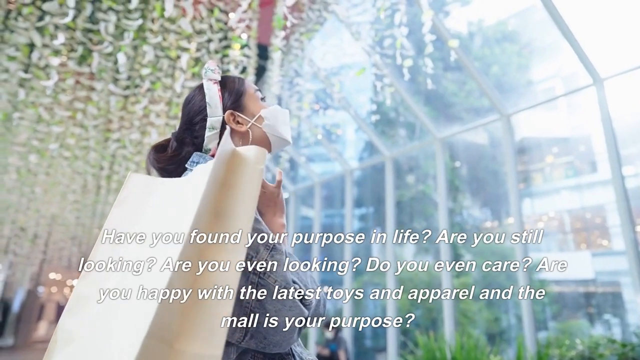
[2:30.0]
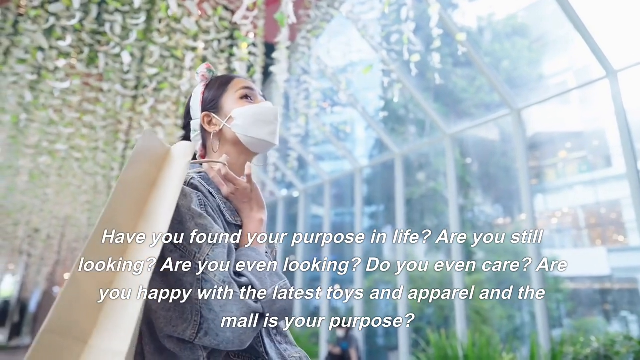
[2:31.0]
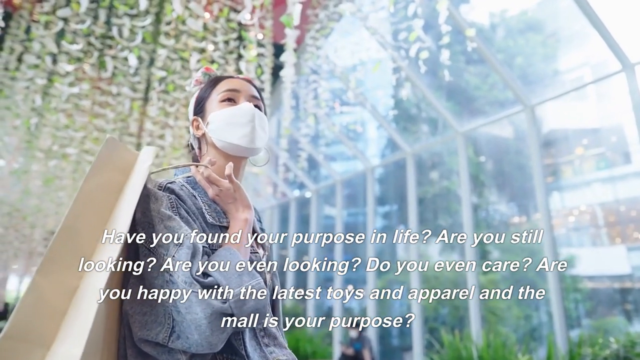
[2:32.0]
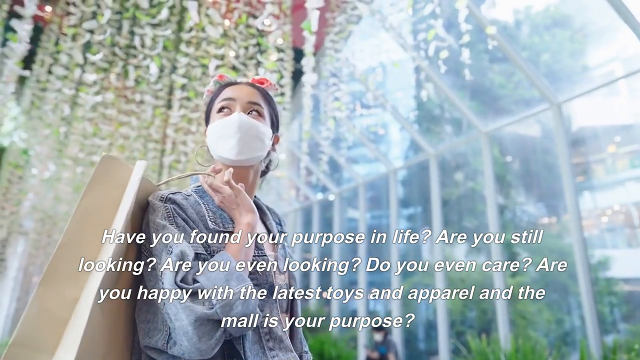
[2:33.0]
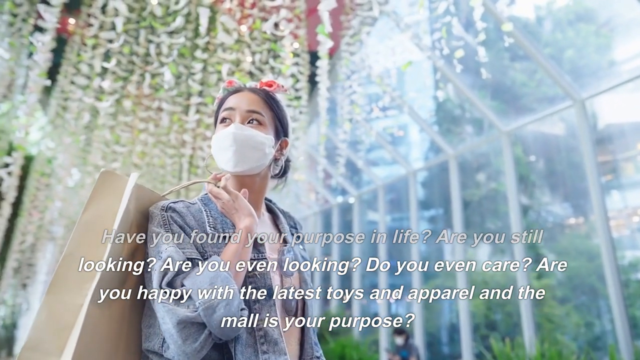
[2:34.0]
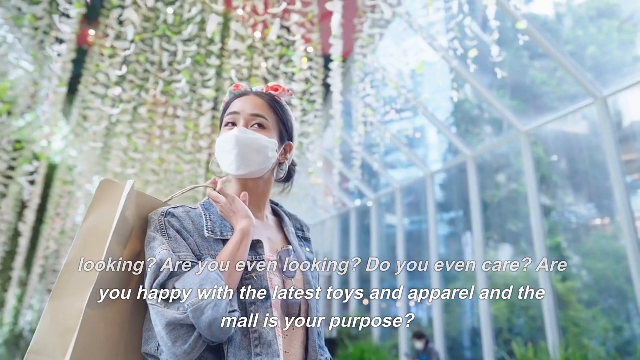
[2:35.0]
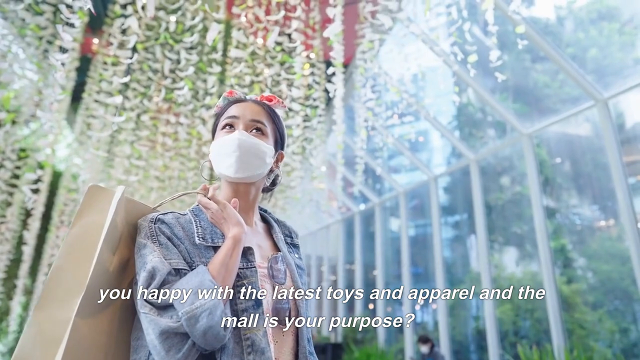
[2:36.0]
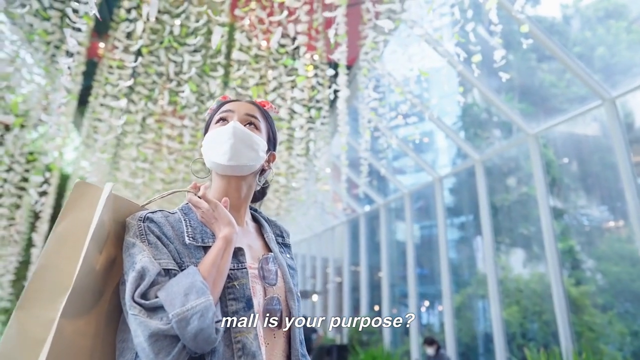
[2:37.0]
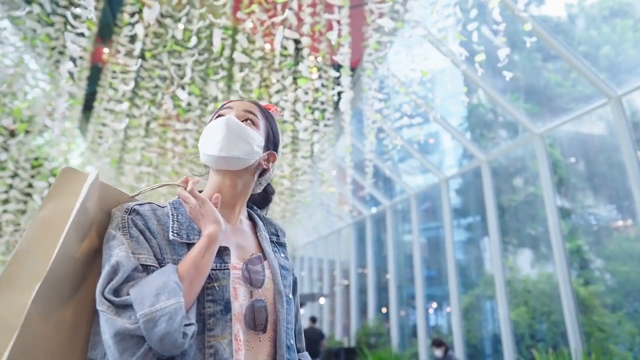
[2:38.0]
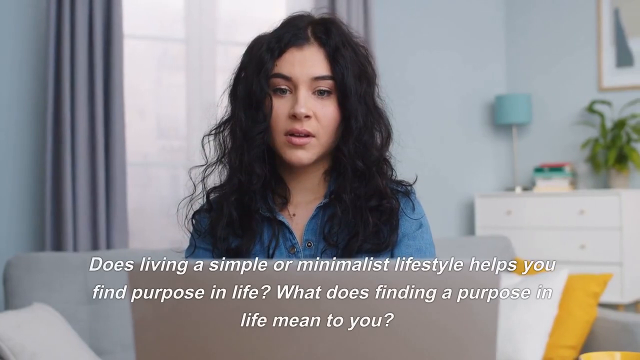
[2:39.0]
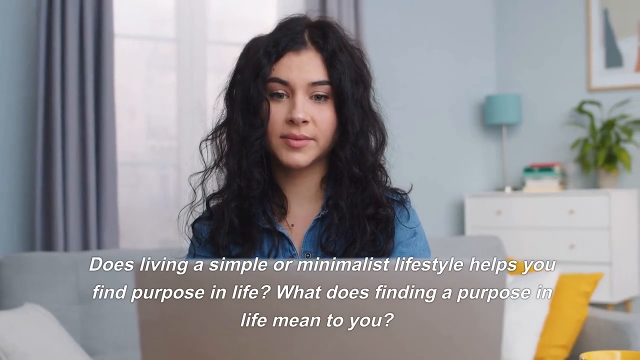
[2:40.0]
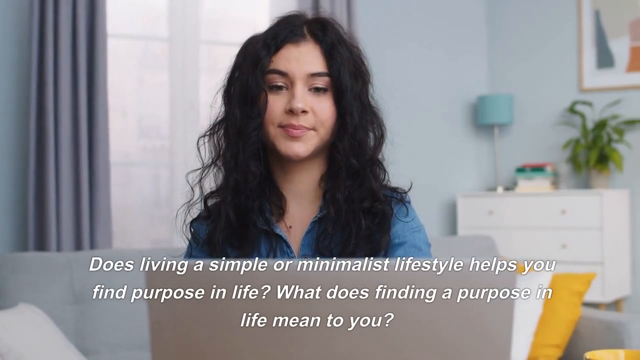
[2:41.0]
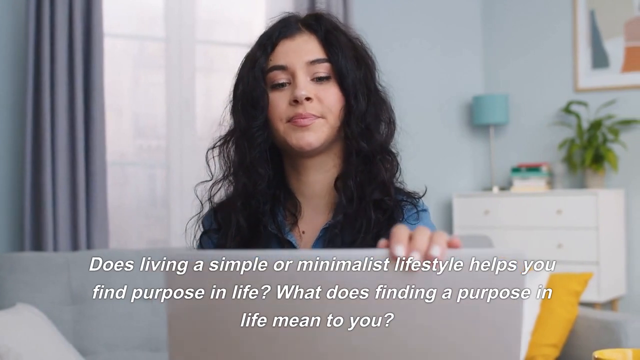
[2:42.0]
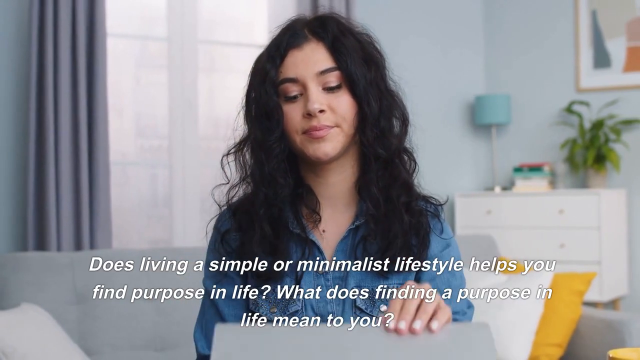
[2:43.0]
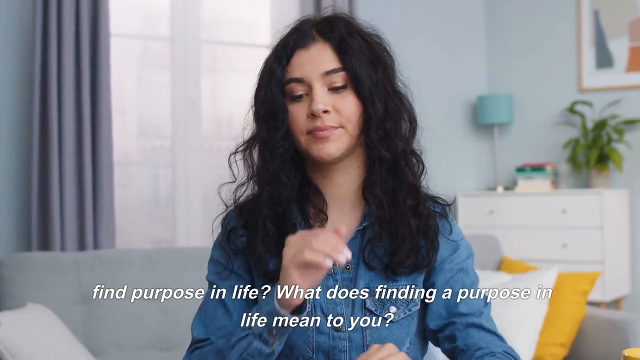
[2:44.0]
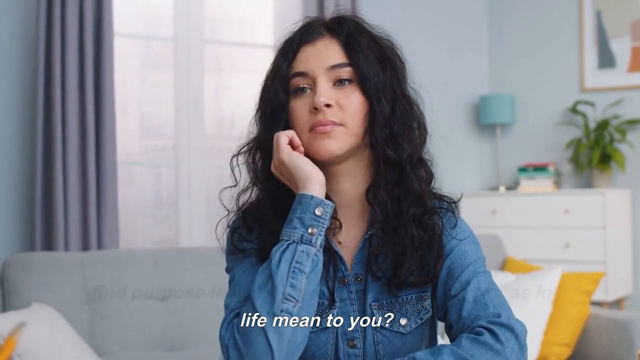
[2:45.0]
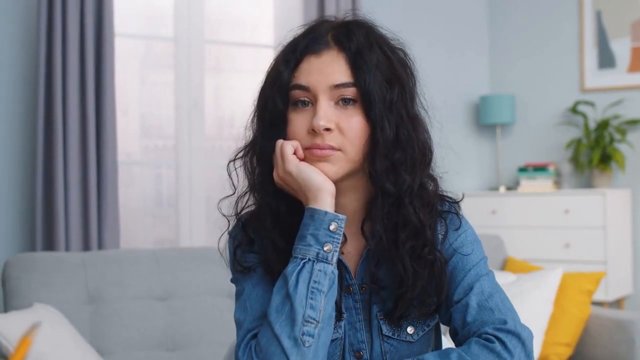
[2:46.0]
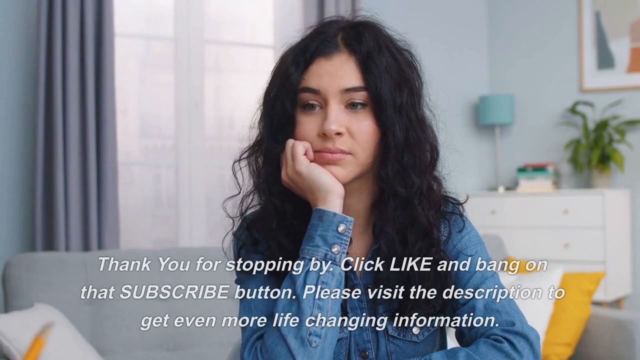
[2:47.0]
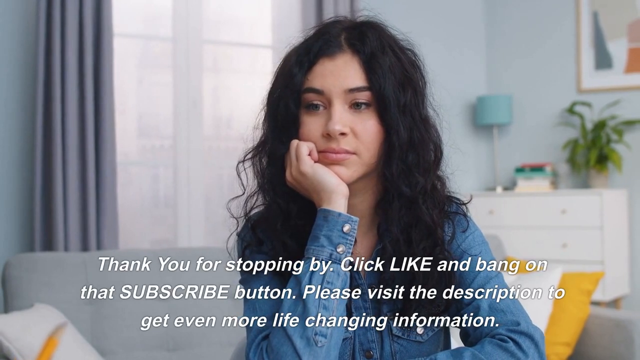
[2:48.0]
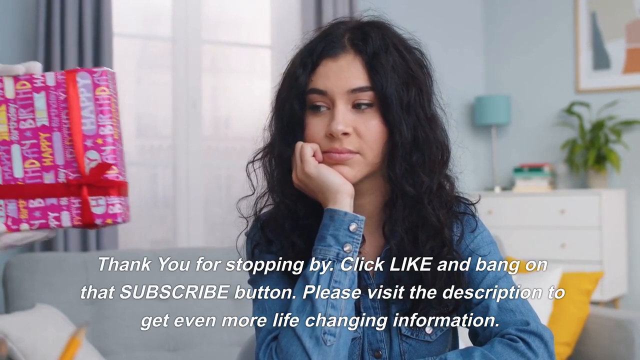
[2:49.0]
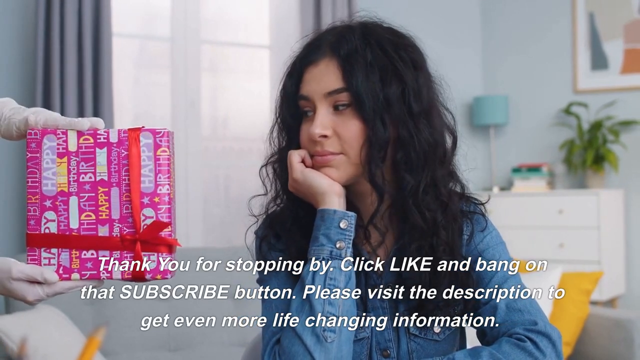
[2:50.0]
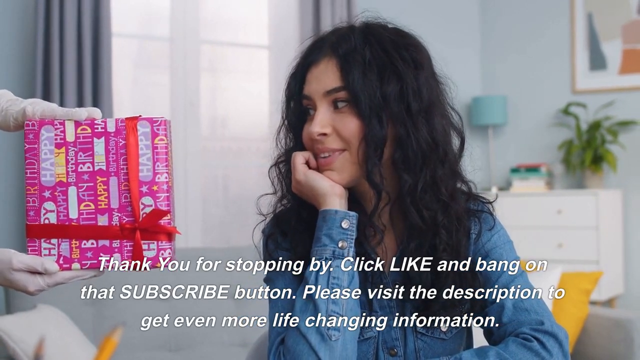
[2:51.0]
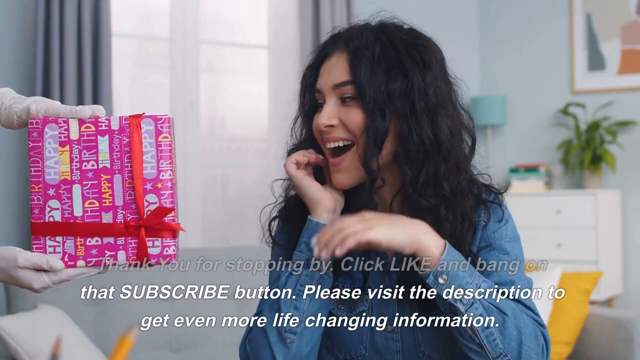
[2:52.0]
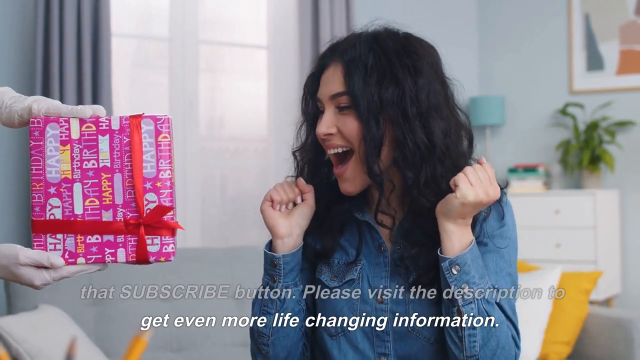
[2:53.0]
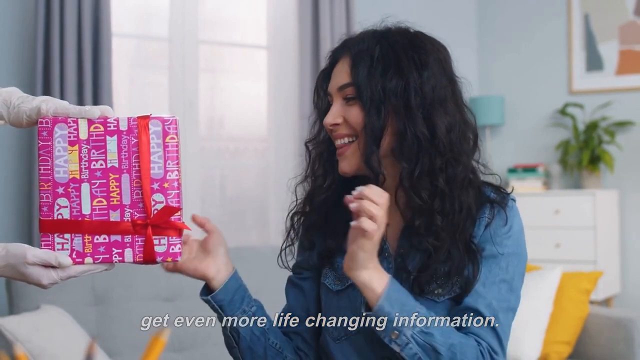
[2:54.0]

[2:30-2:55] A woman who appears to be Asian, wearing a face mask of a sort of COVID type, looks out of a window in a shopping mall, moving her head around and looking up at the sky. The dark-haired woman seen earlier looks very relaxed as the text asks: "does living a simple or minimalist lifestyle helps you find purpose in life? What does finding a purpose in your life mean to you?" She closes her laptop. At the end of the video the text reads: "thank you for stopping by. Click like and bang on the subscribe button. Please visit the description to get even more life-changing information." The video finishes with the dark-haired girl being passed a wrapped birthday present and looking excited to receive it.